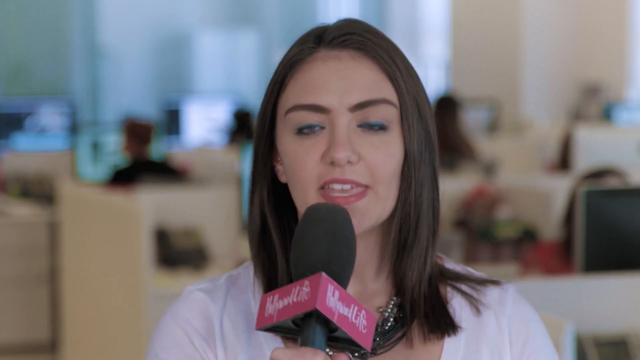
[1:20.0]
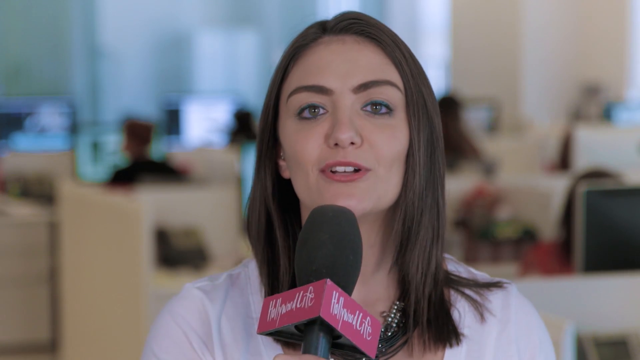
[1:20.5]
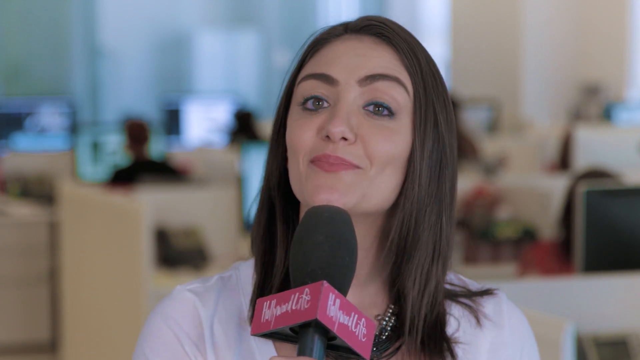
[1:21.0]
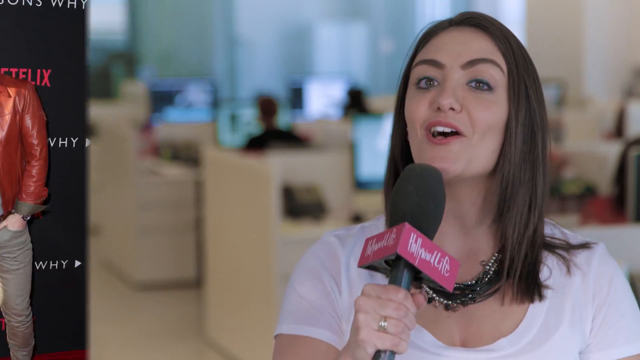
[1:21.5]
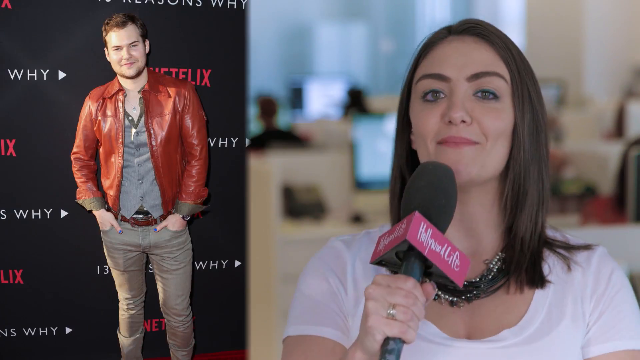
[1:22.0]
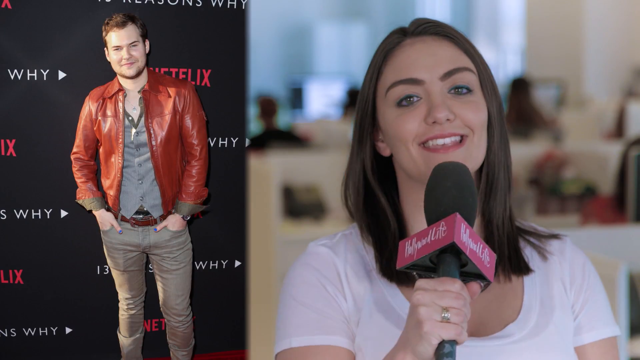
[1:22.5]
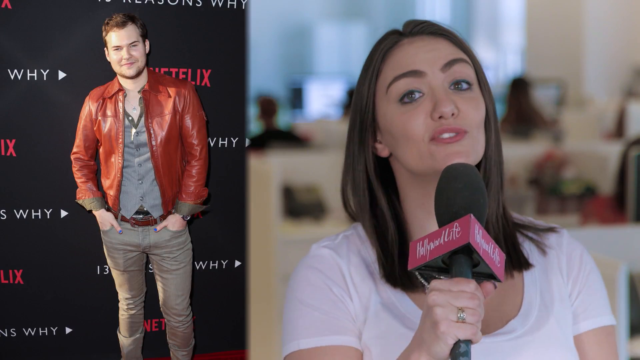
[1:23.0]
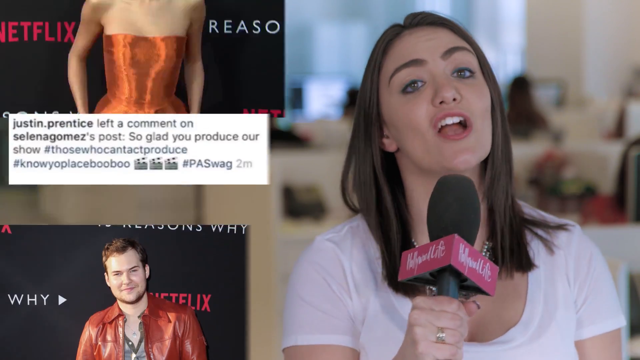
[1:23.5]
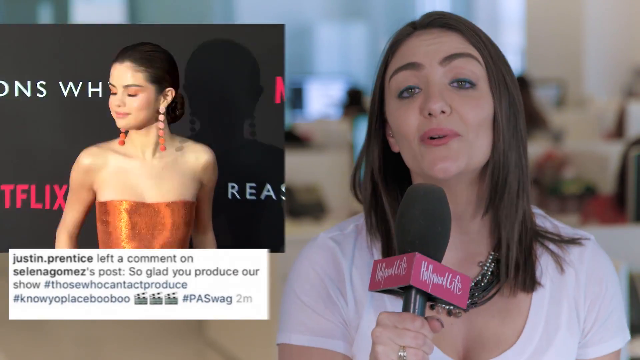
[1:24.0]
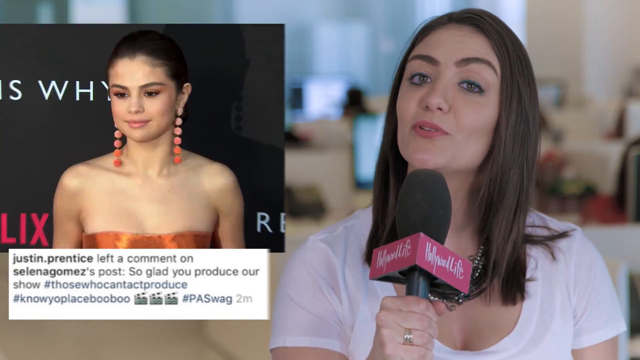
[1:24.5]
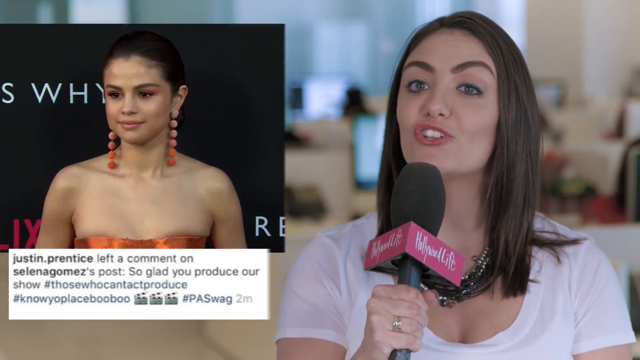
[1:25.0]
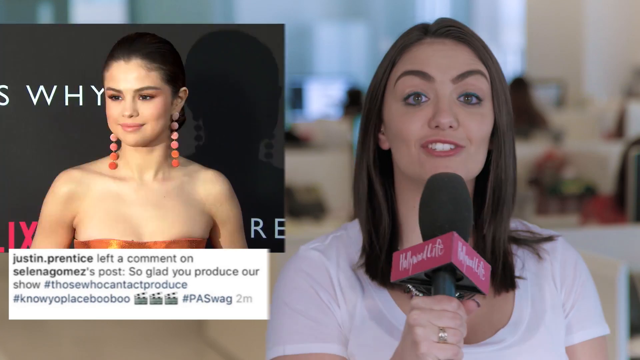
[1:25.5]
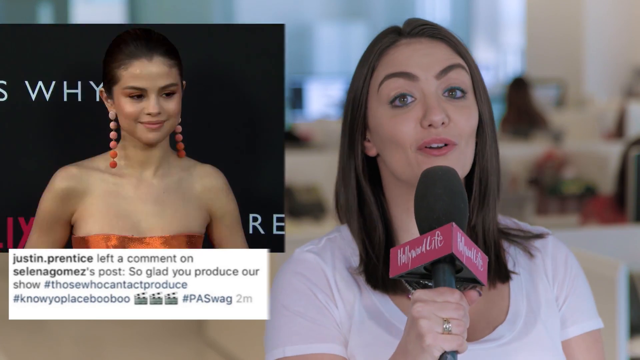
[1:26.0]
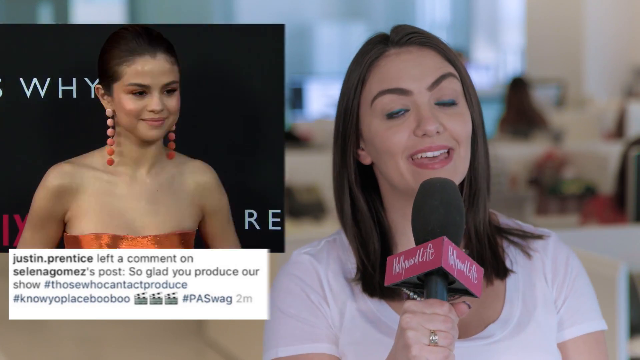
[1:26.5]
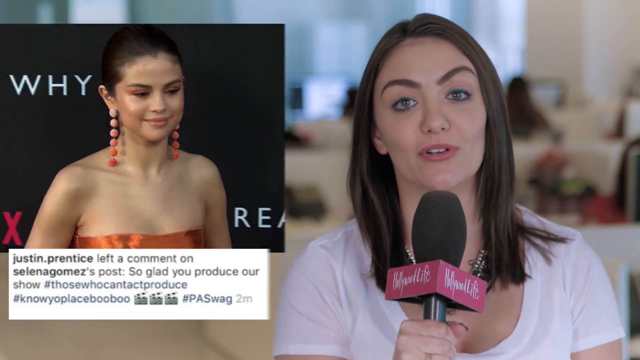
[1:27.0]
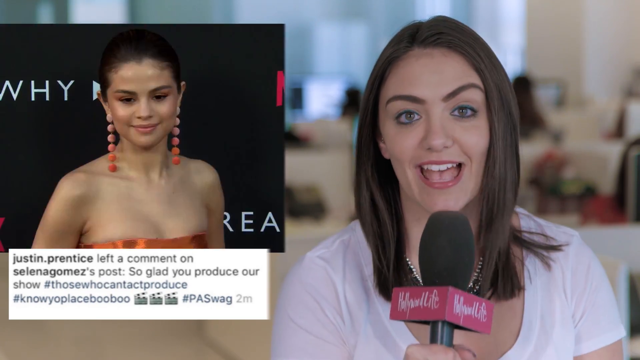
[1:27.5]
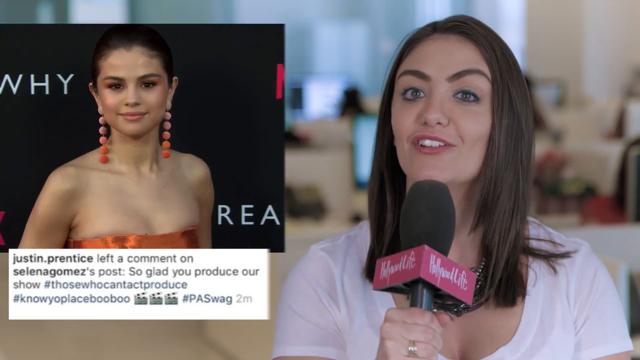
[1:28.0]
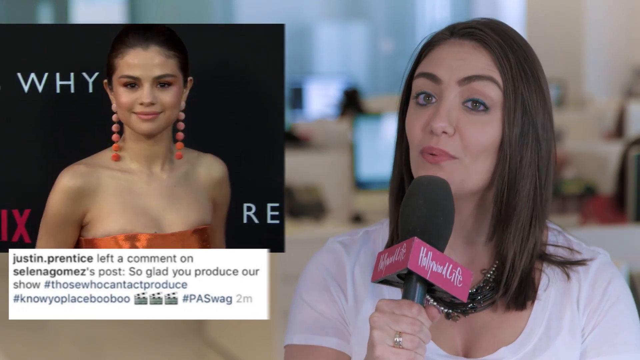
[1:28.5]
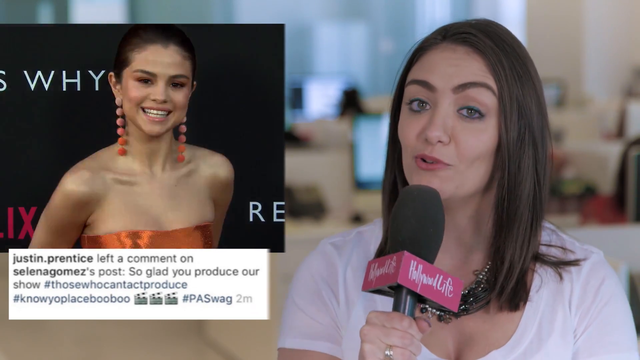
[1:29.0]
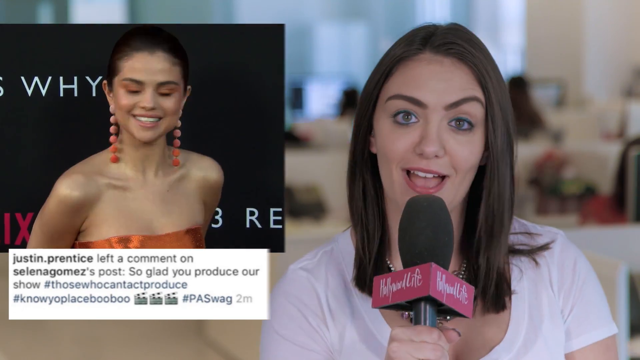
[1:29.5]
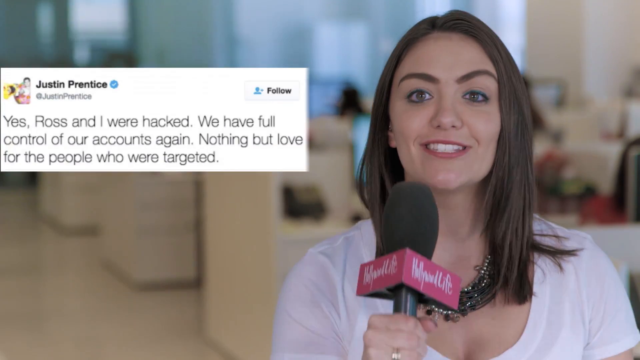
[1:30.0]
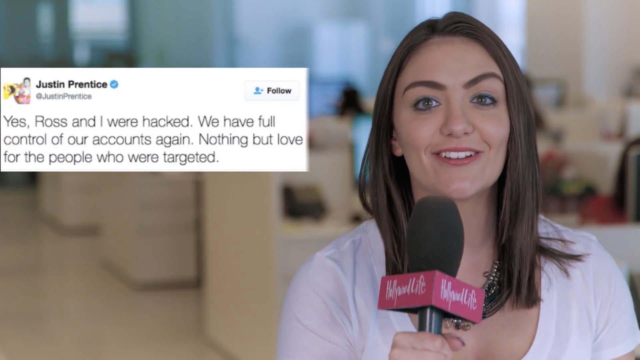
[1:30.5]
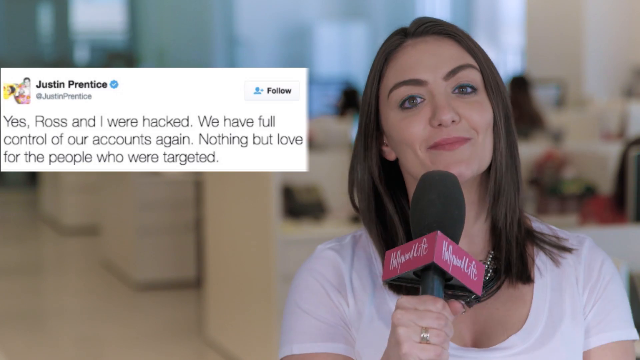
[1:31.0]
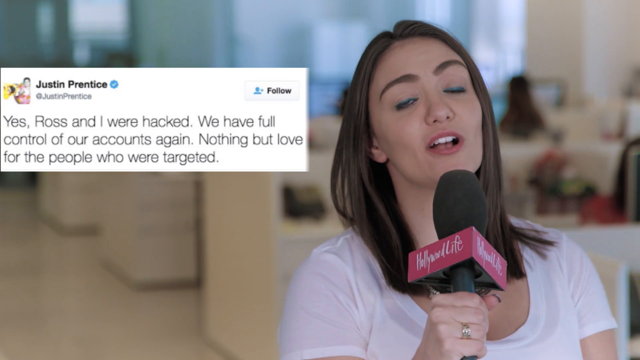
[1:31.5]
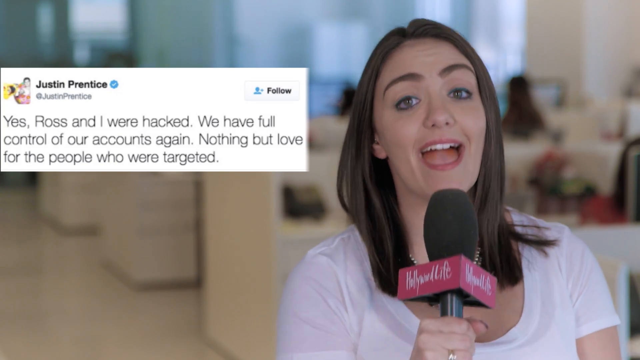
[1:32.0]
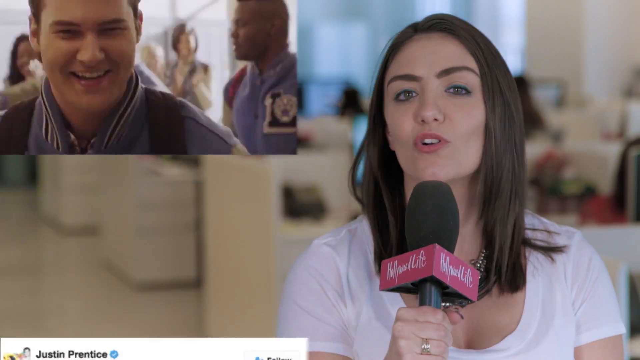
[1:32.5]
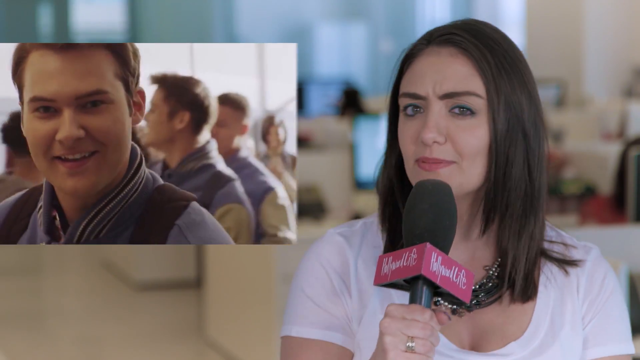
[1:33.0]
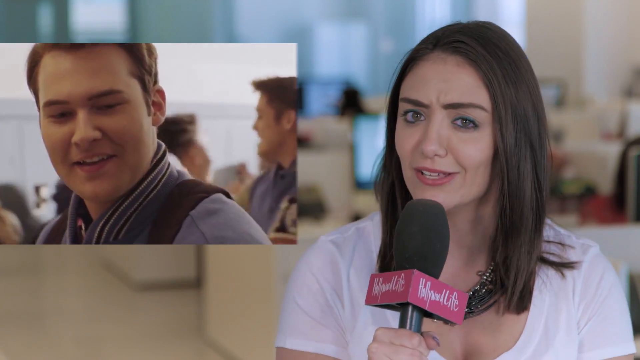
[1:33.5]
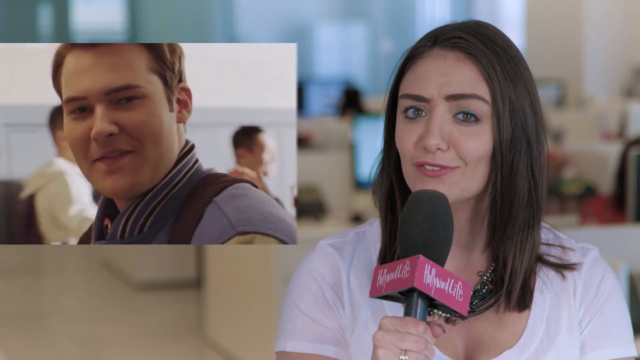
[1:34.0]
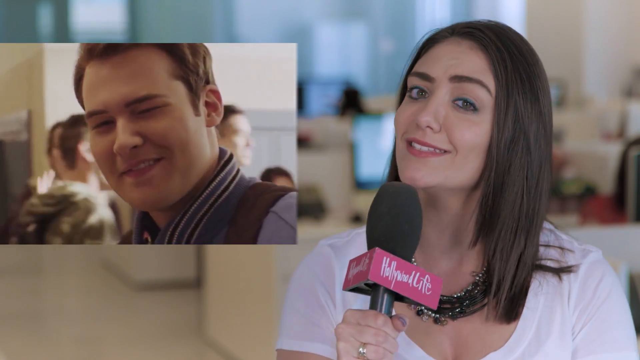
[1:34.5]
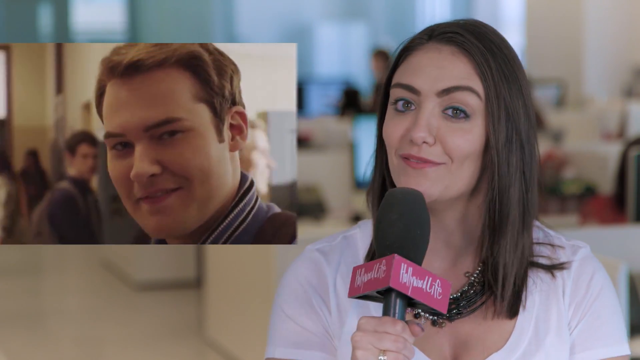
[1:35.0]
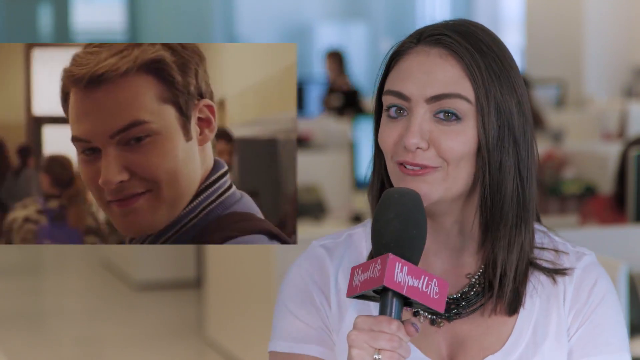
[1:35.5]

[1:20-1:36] The reporter speaks on the right side of the frame while more superimposed videos come and go on the left. One shows Selena Gomez with a tweet that is hard to see because other content covers it; it reads something like "so glad you produce our", followed by a hashtag reading "know your place boo-boo", over an image of apparently one of the cast members of 13 Reasons Why. Another mini superimposed video of Selena Gomez follows, then what looks like another of a cast member. A big tweet then appears on the left instead of a video, from Justin Prentice, reading "yes Ross and I were hacked we have full control of our accounts again nothing but love for the people who were targeted". The video then ends.